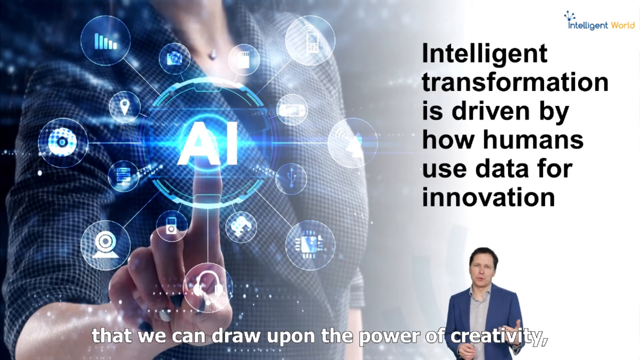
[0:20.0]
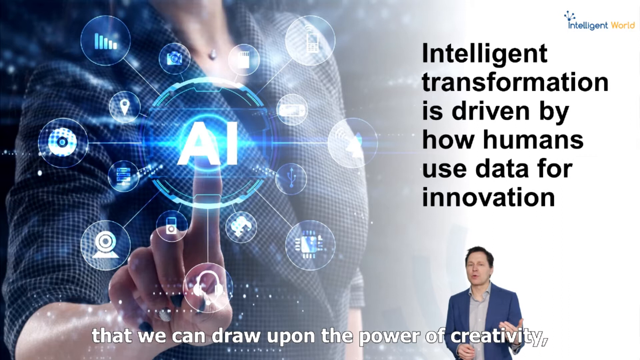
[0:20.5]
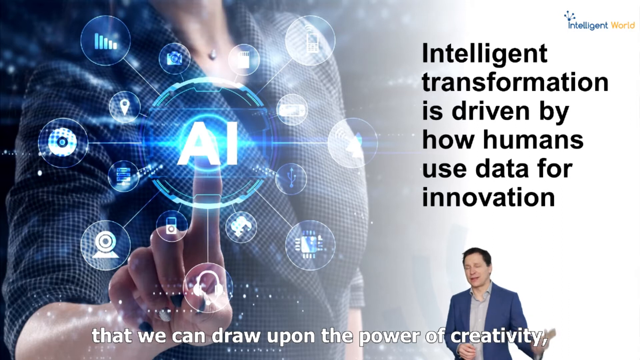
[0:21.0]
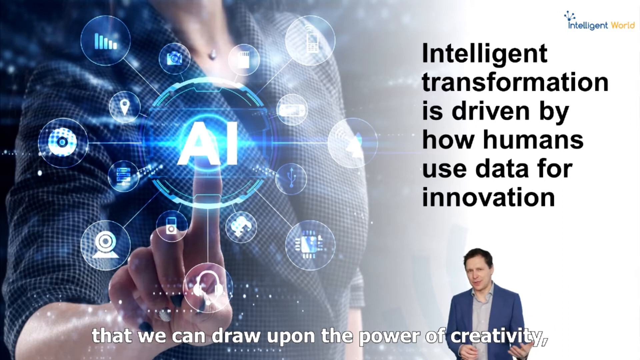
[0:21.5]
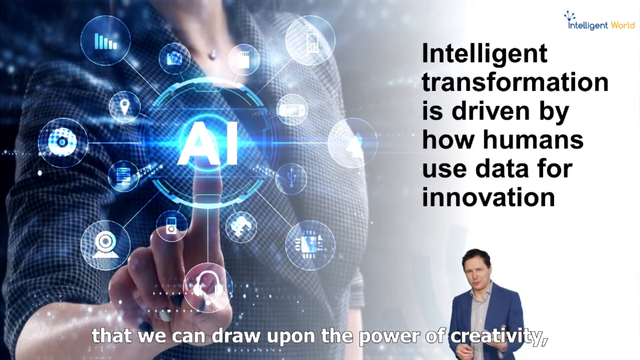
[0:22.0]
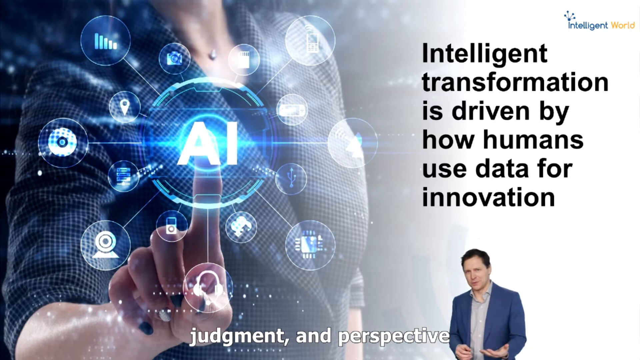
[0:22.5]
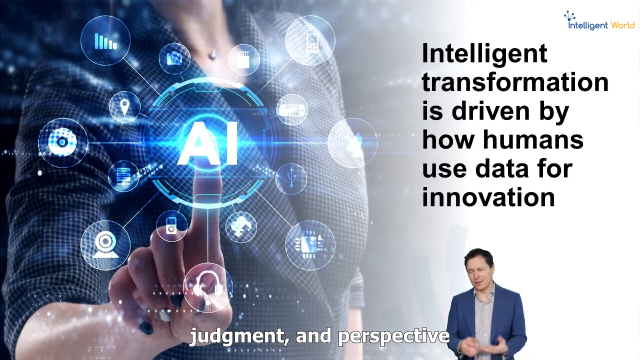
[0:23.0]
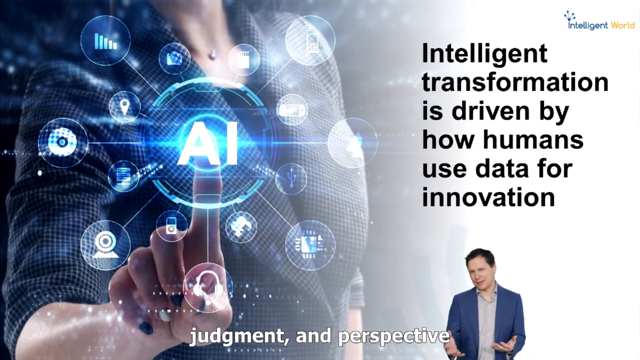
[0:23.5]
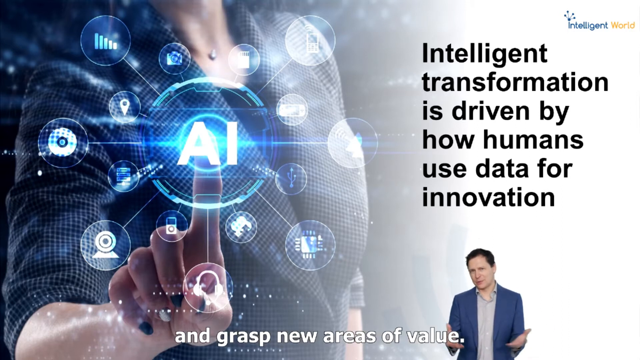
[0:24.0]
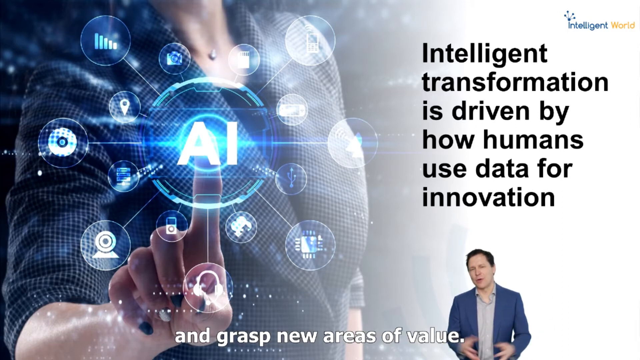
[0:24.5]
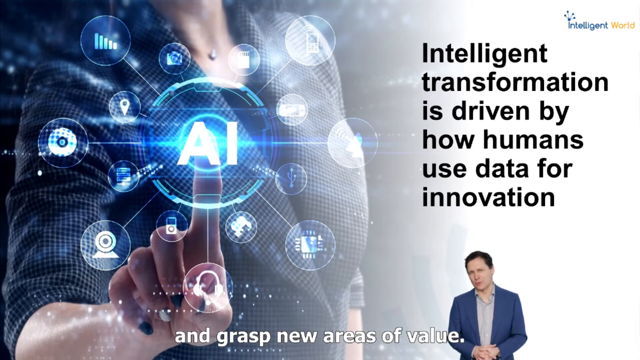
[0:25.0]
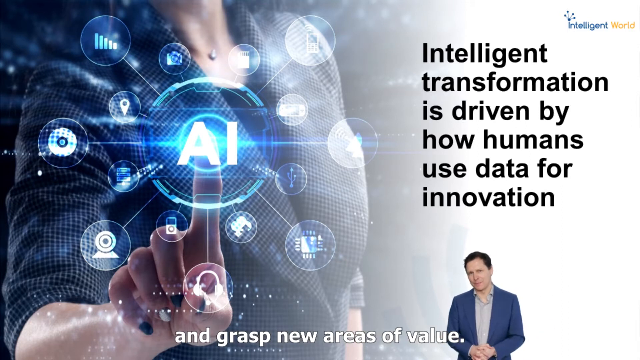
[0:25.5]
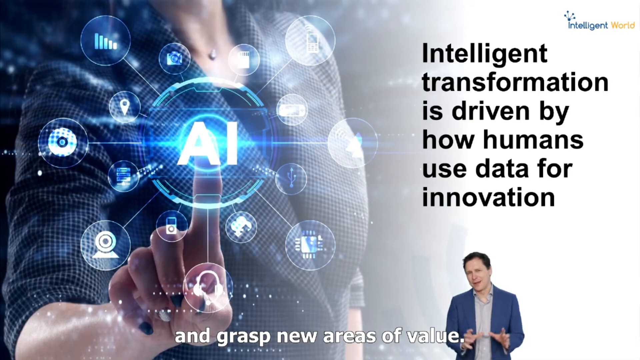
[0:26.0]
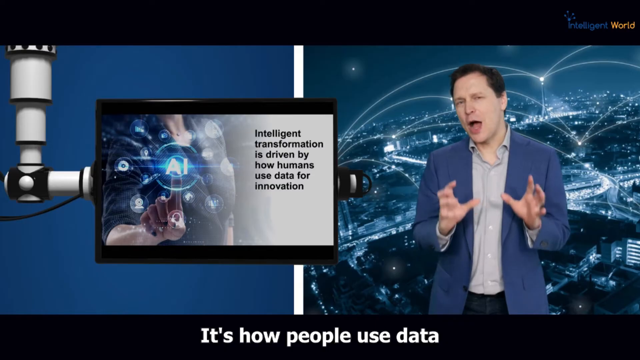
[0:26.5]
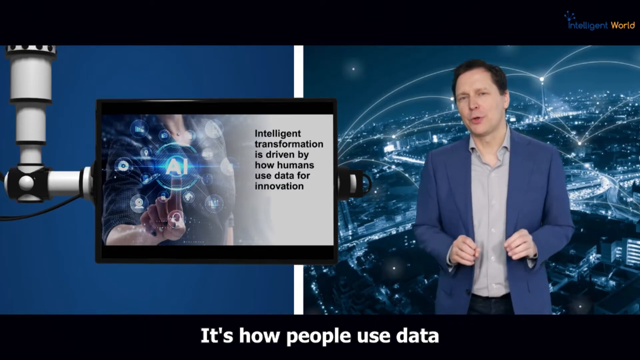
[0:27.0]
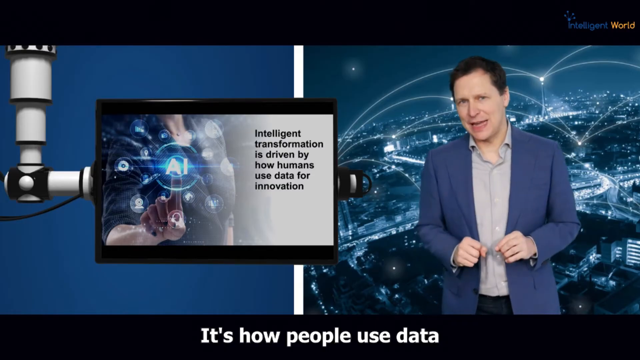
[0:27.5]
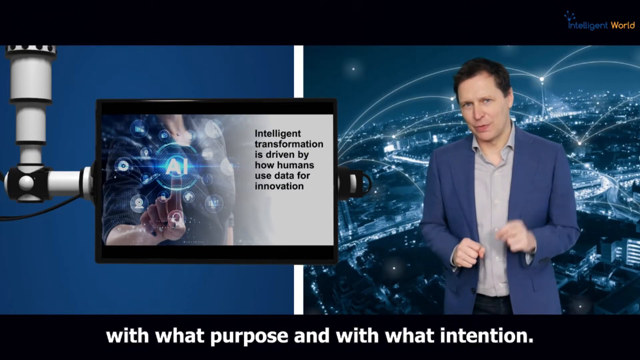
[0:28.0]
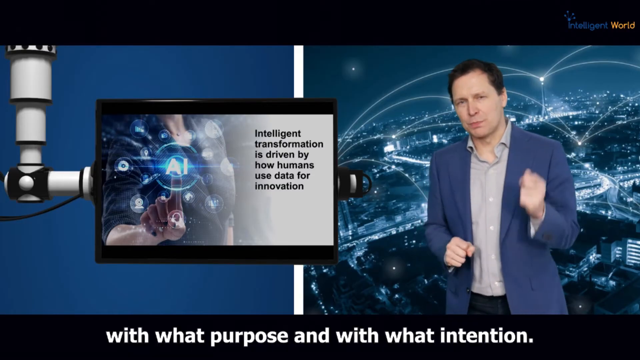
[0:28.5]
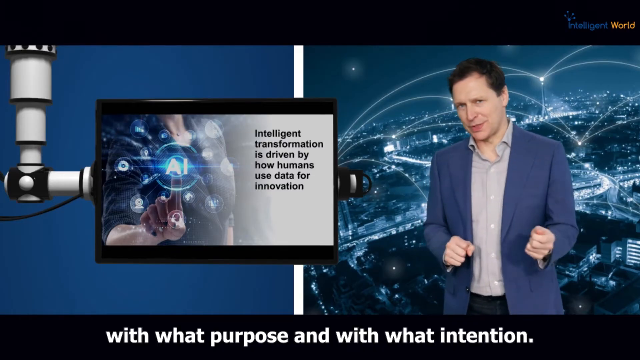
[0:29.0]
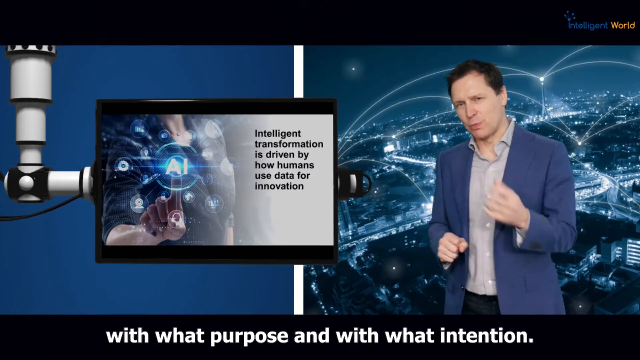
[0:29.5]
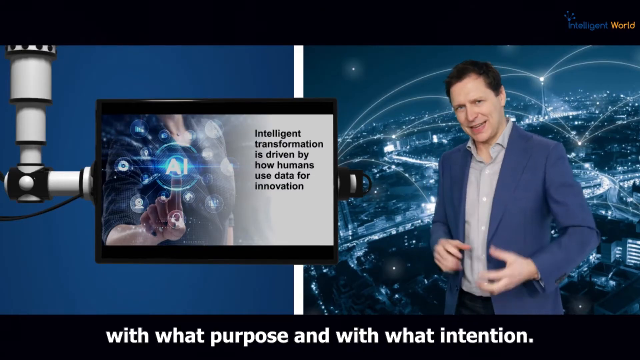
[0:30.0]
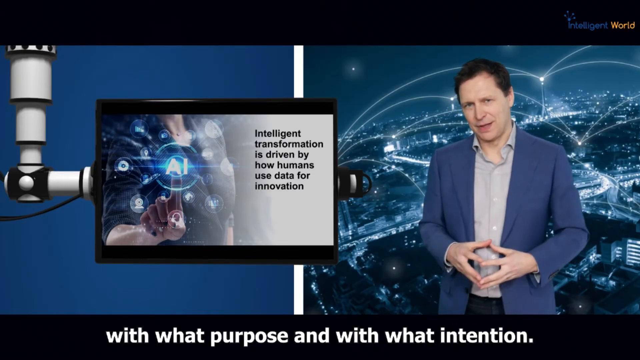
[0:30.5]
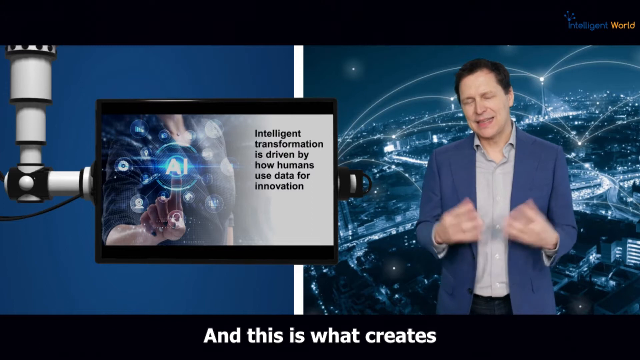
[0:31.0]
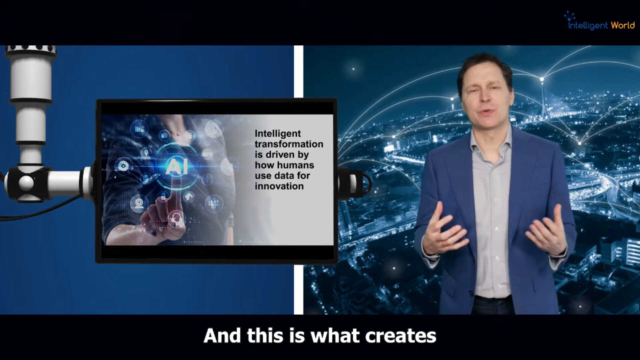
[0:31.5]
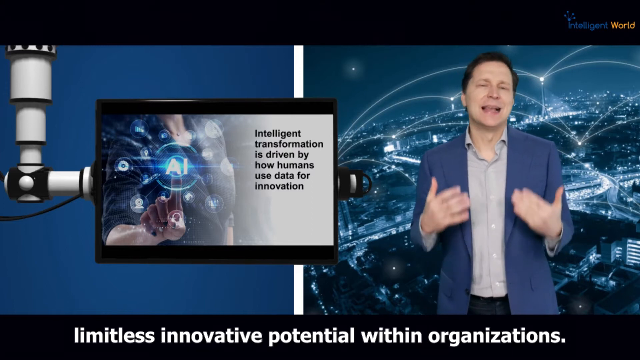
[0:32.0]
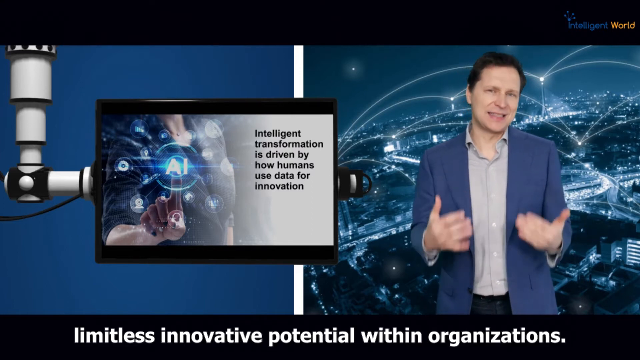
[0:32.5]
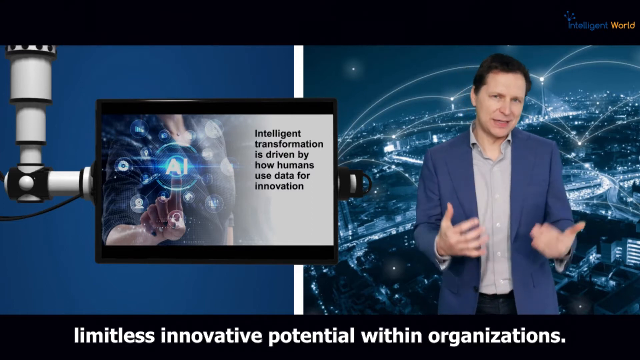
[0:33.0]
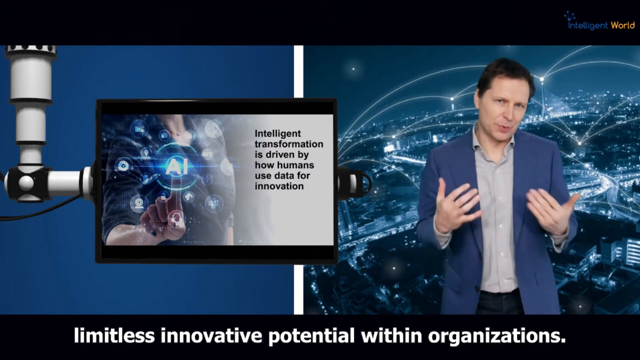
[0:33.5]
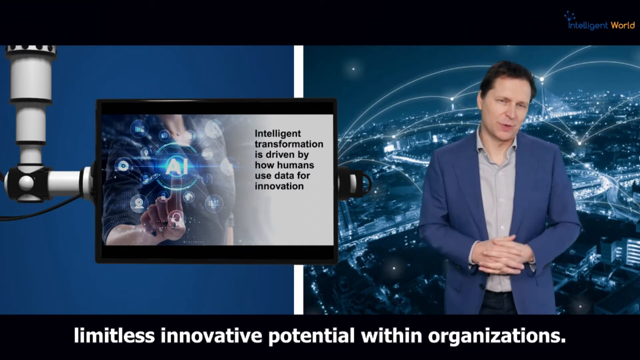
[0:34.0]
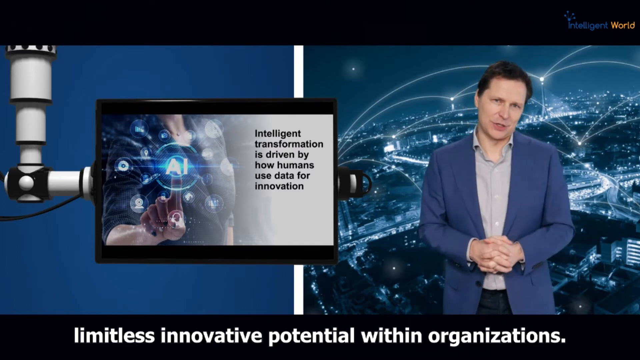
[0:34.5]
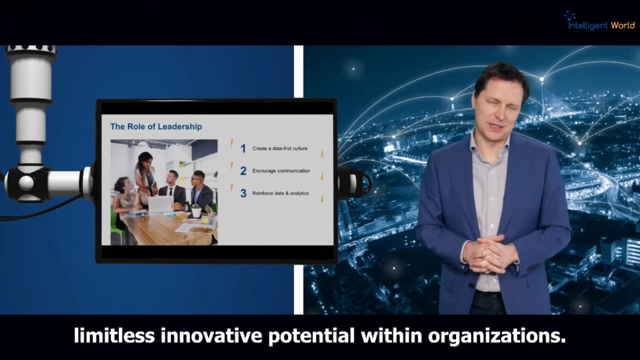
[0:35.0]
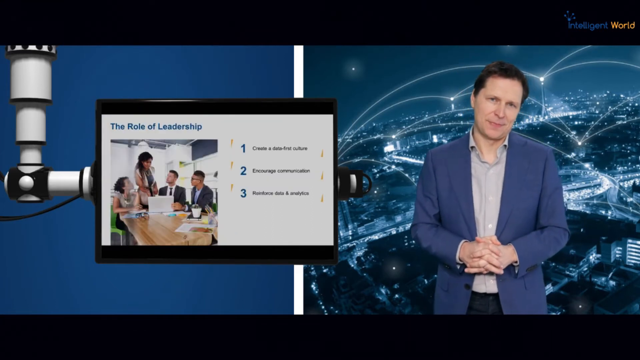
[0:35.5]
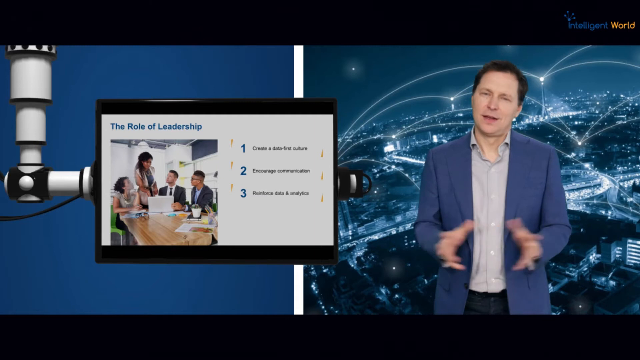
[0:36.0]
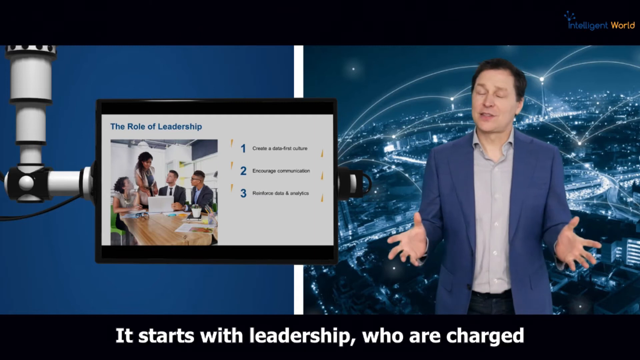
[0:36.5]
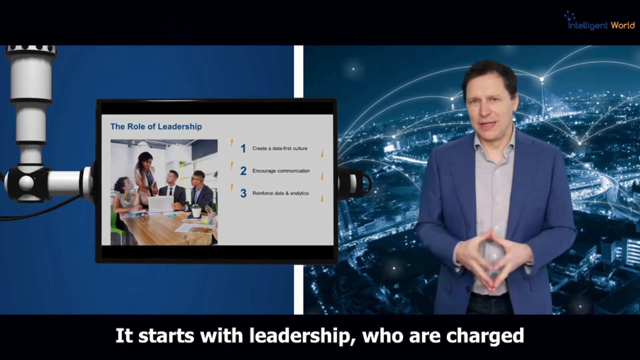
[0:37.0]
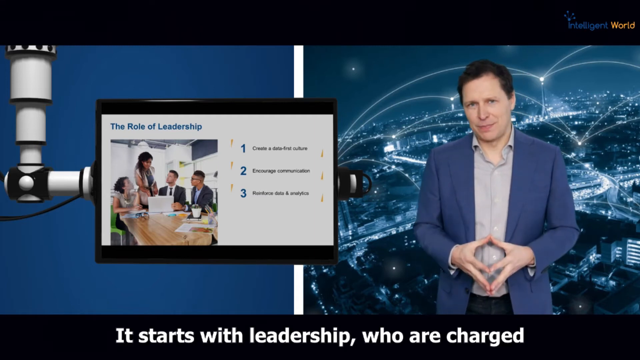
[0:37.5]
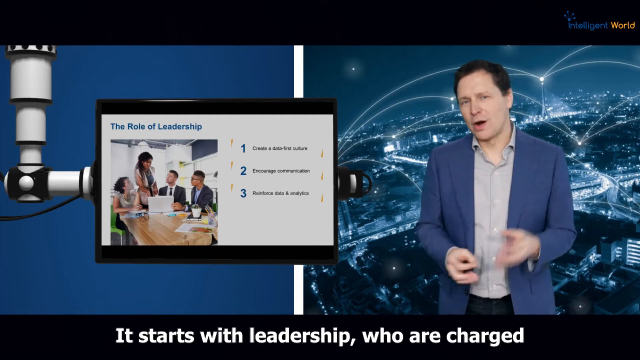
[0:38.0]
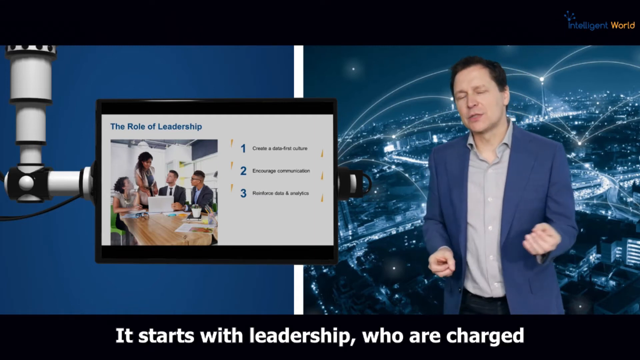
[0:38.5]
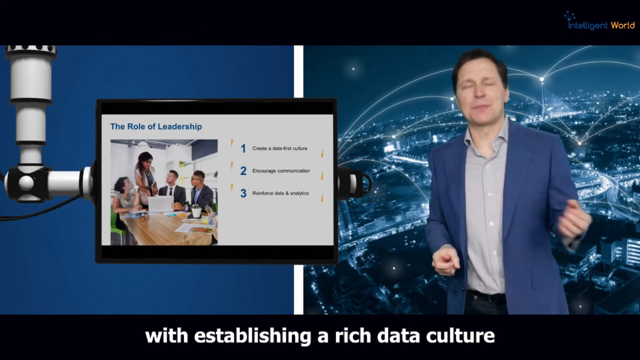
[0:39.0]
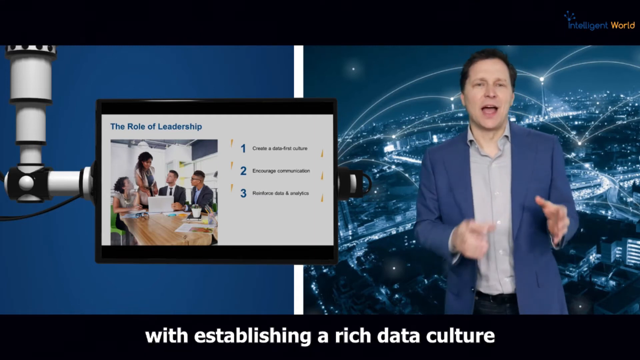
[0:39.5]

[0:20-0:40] The man, apparently the speaker giving the presentation, is minimized and standing kind of in what seems to be the lower right-hand corner. A large computer graphic, or a picture within a graphic, is blown up on screen. In the middle it says "AI," and a person who looks like a woman touches the center with her pointer finger. On the right-hand side the text reads "intelligent transformation is driven by how humans use data for innovation." Below, the man speaks and moves his hands as closed captions come up, saying something like "with what purpose and with what intention." He is then shown at regular size rather than minimized, though the bottom of his legs is not visible, with a backdrop of a city behind him. On the left-hand side, the monitor plays a PowerPoint presentation.